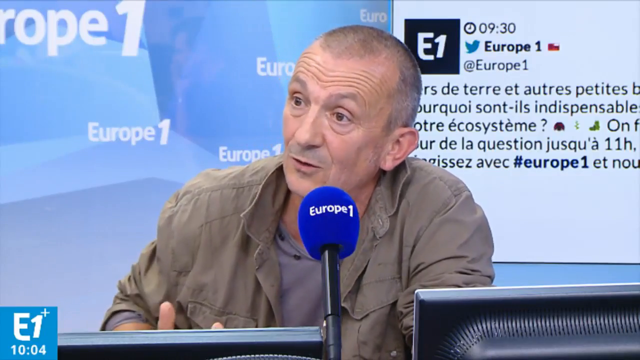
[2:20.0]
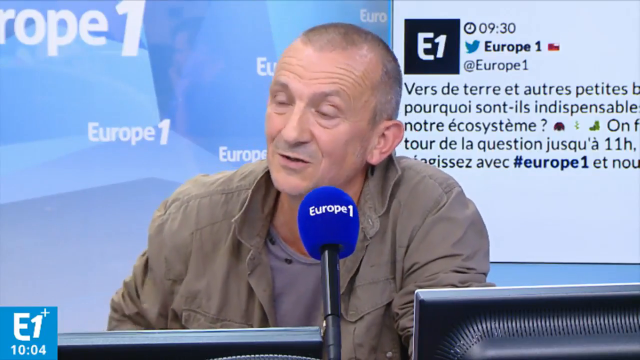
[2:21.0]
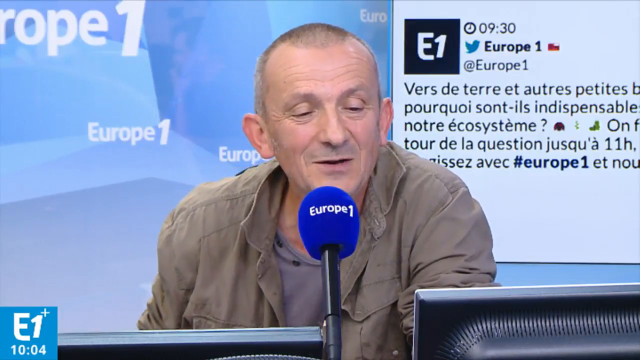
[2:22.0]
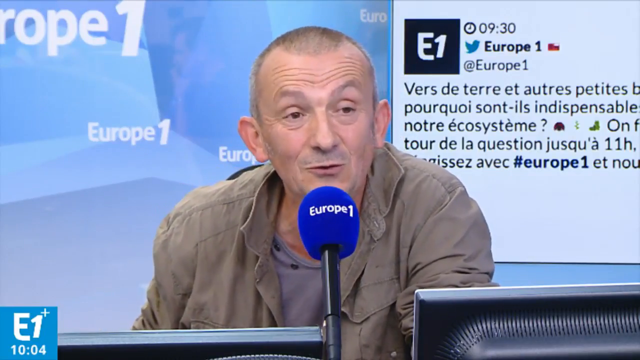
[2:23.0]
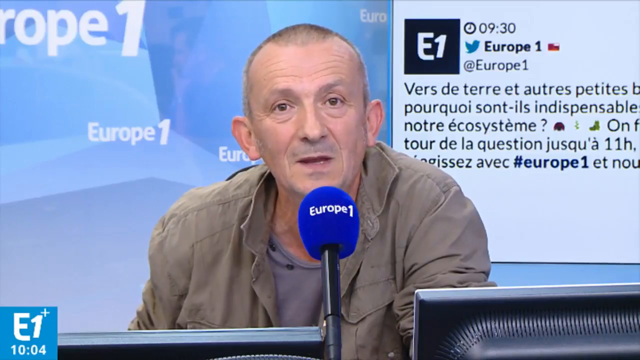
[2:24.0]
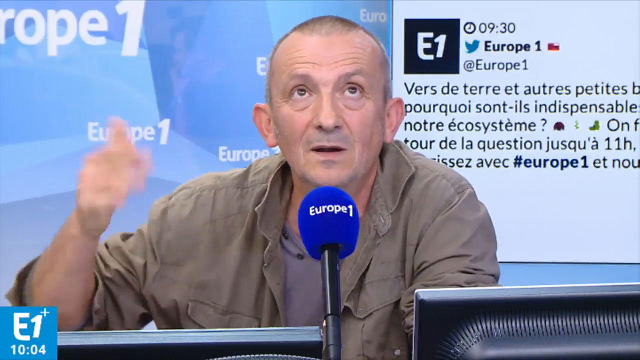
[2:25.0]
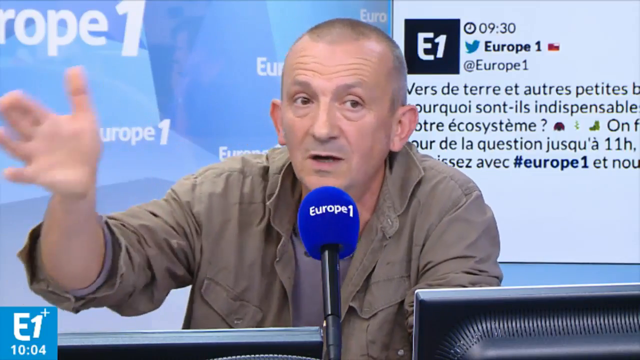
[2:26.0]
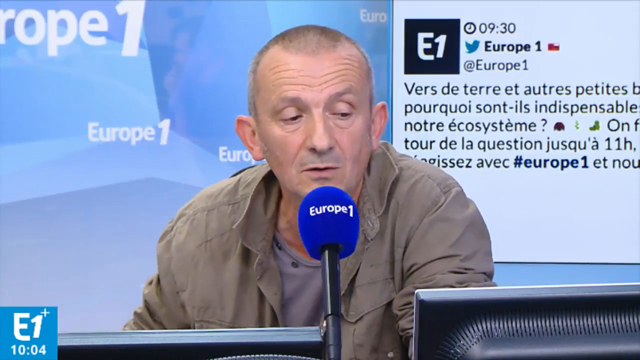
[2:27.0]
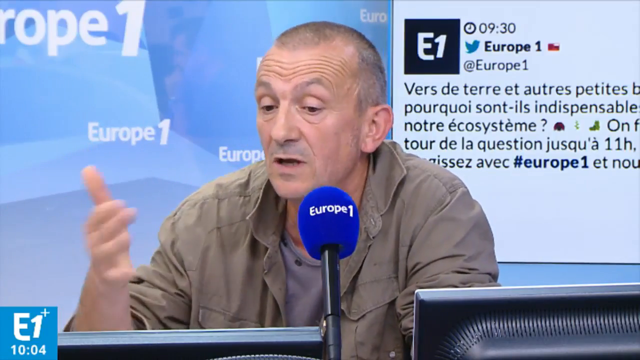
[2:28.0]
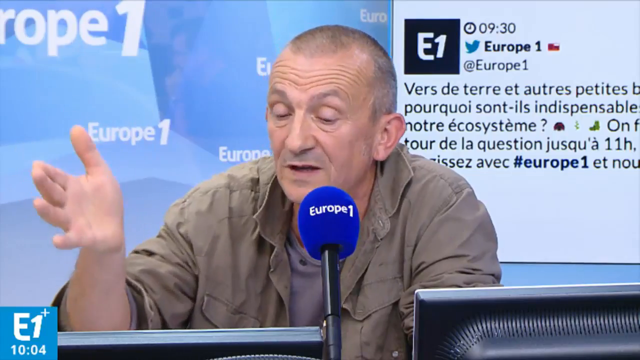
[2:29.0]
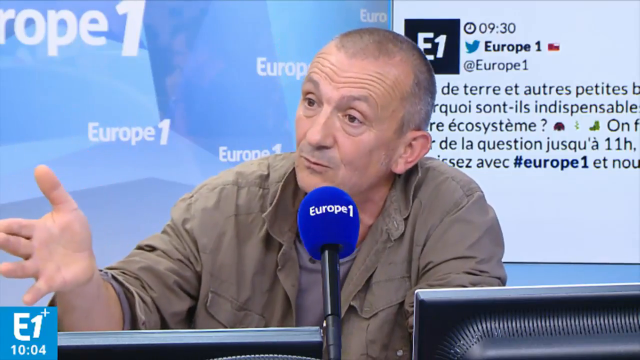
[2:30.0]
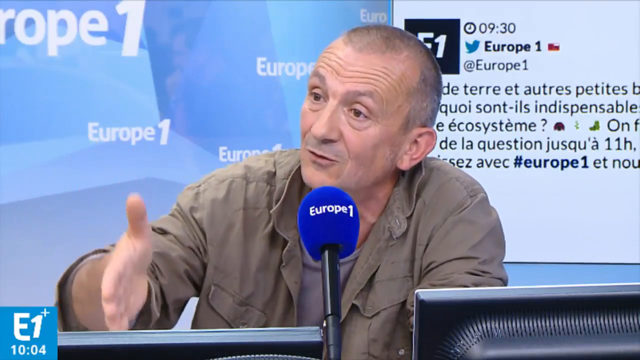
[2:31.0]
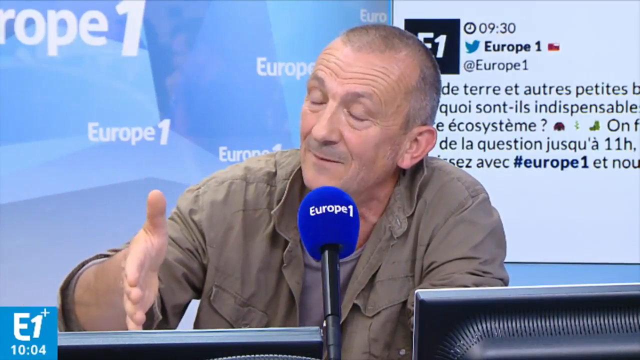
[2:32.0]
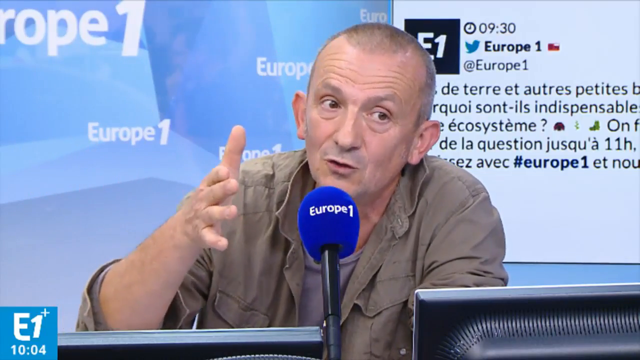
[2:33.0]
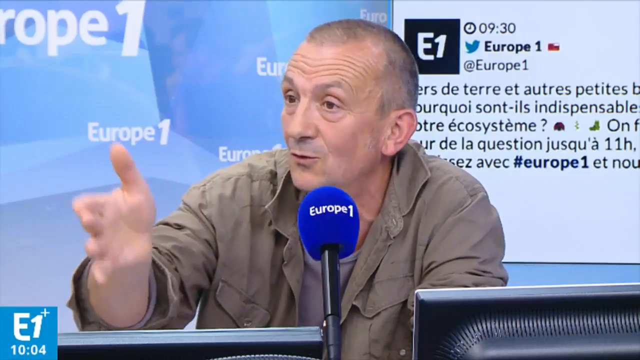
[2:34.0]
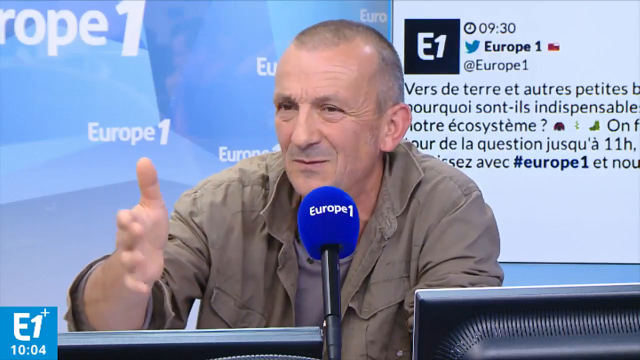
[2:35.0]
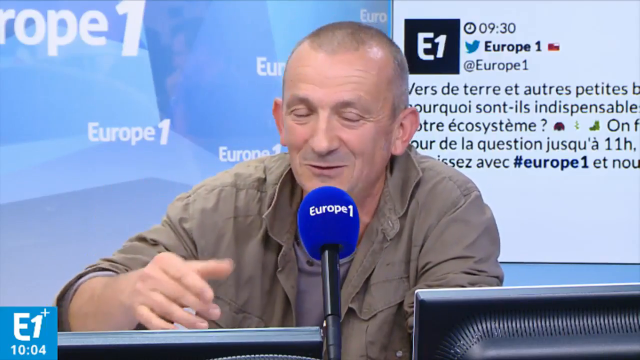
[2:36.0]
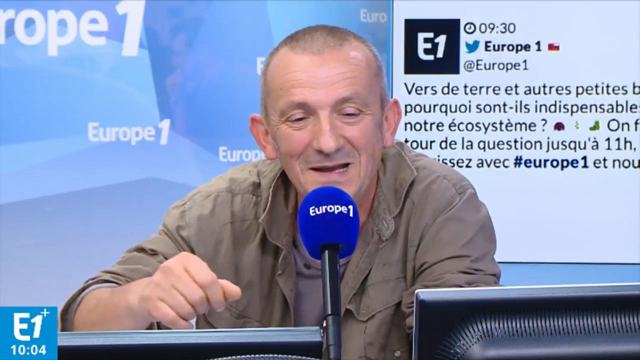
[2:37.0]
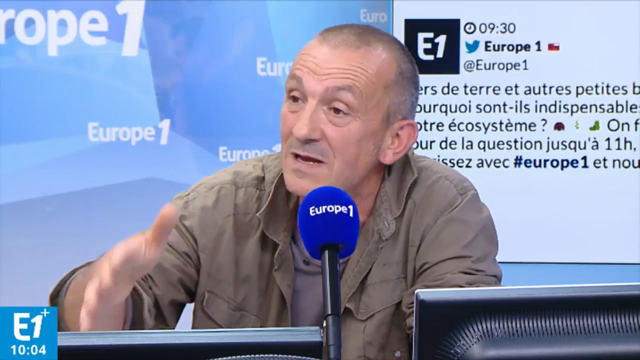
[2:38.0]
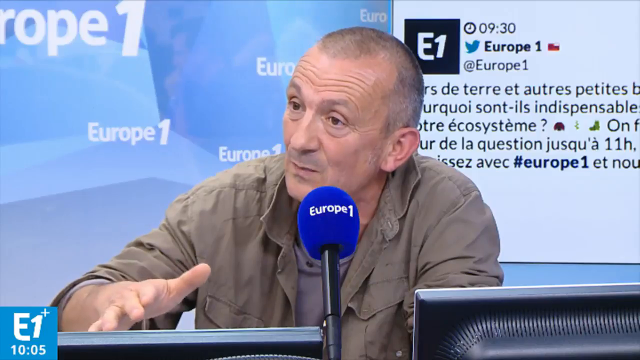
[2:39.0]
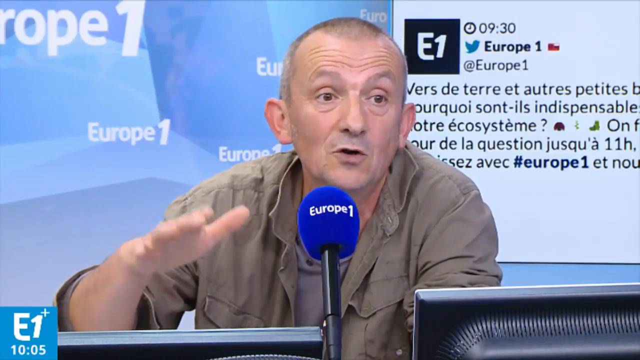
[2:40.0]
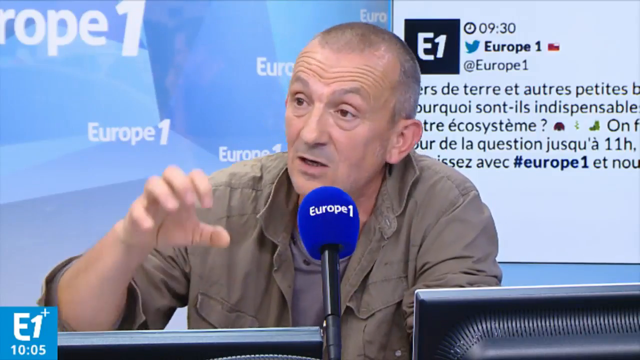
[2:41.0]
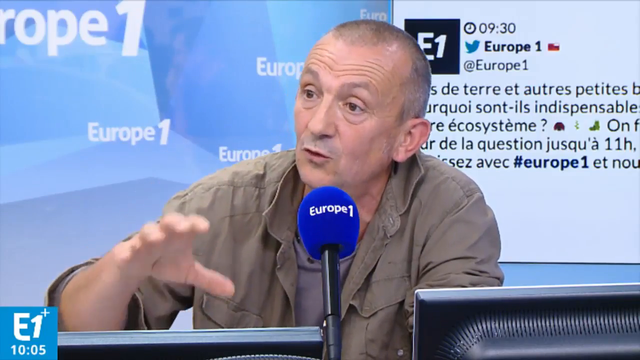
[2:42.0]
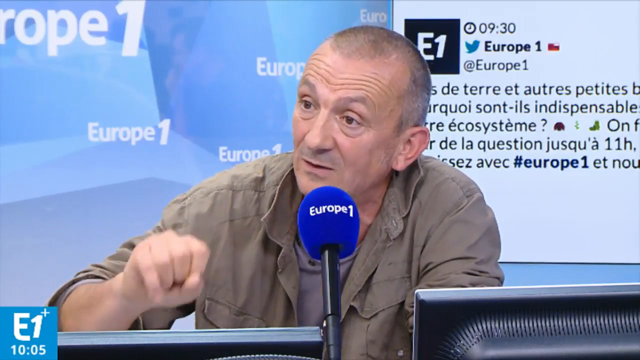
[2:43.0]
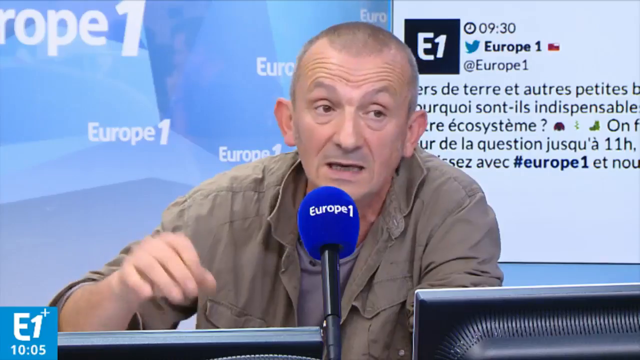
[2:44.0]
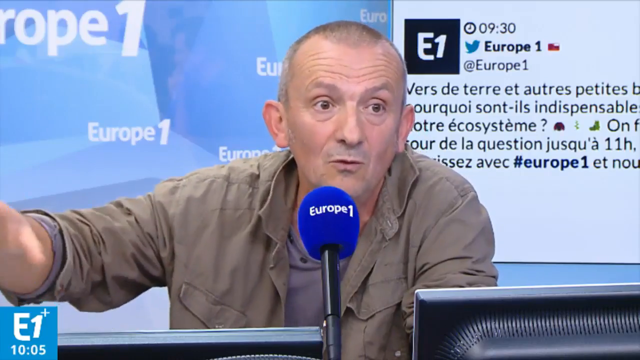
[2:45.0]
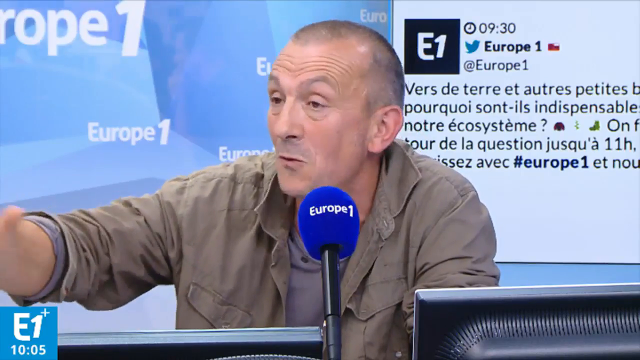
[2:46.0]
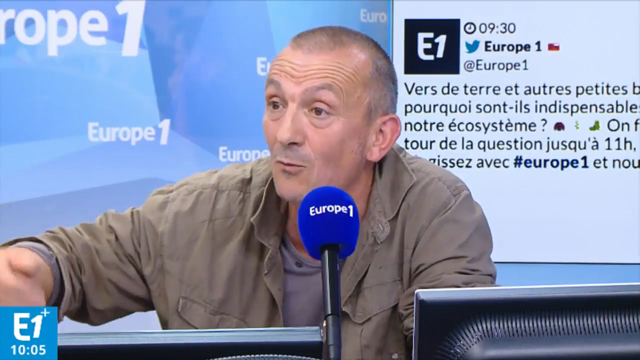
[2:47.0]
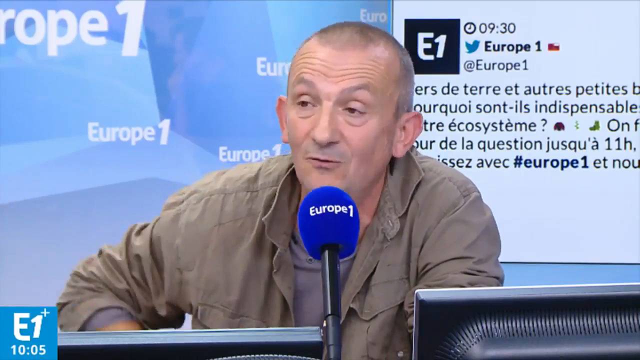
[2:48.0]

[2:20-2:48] The old man, in an unbuttoned shirt with a t-shirt inside, talks using hand gestures, looking sideways then forward, repeatedly, as if talking to someone. His eyes look swollen and he looks tired. He sits with his arms crossed on the table, leaning on it. In front of him is a blue microphone. The woman says something. There are now four people in the studio, but only one person is talking while the others listen. Two of the others wear headphones; at least the woman has earphones on her head.